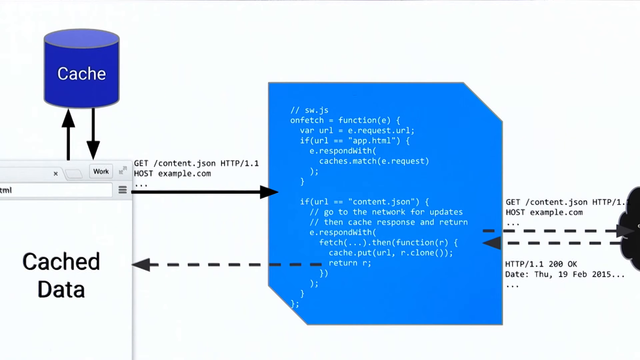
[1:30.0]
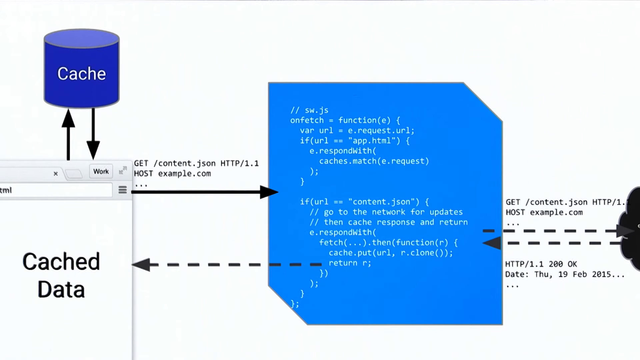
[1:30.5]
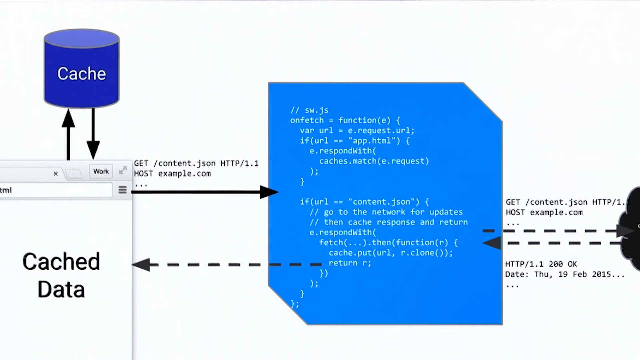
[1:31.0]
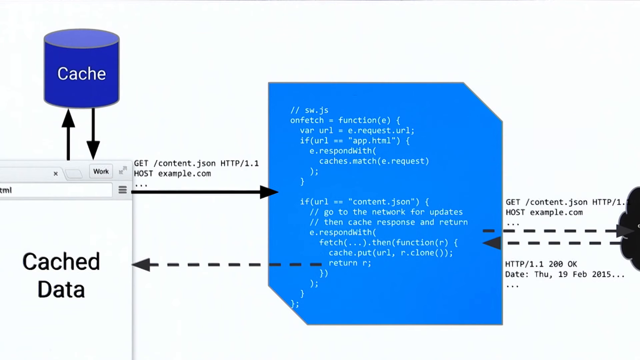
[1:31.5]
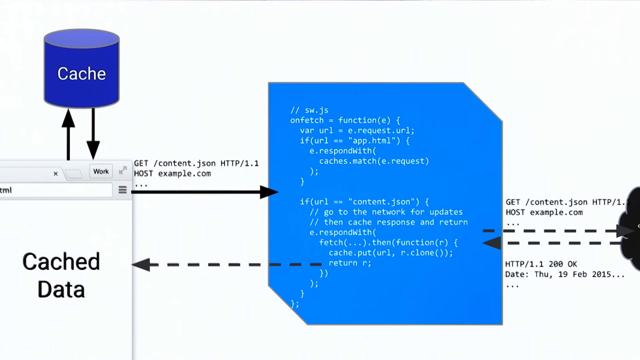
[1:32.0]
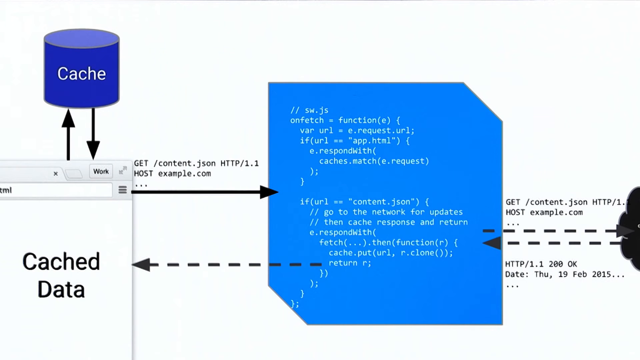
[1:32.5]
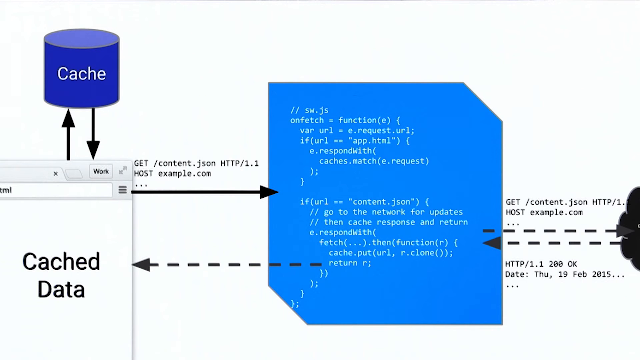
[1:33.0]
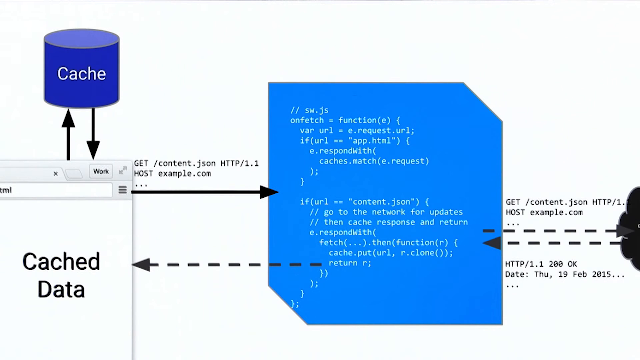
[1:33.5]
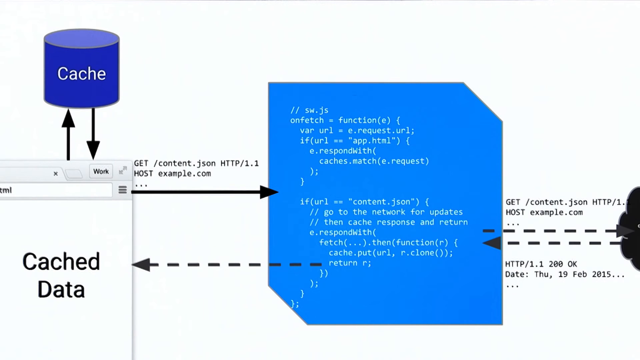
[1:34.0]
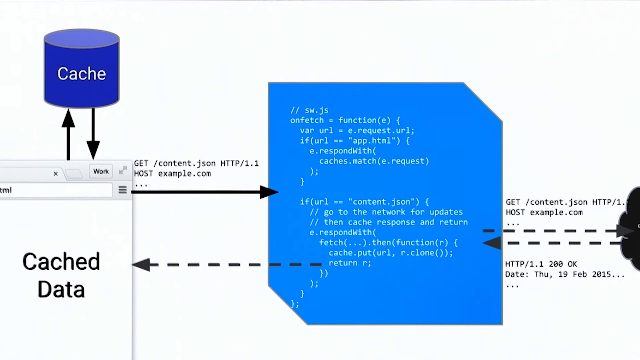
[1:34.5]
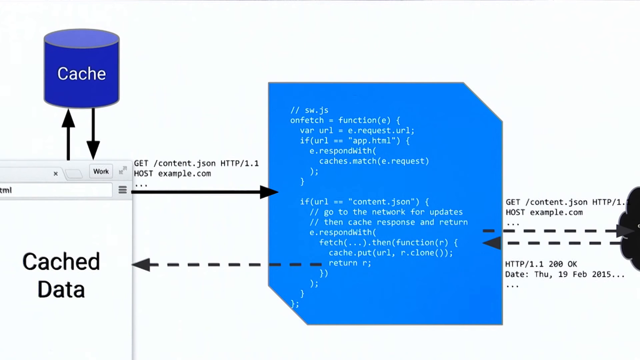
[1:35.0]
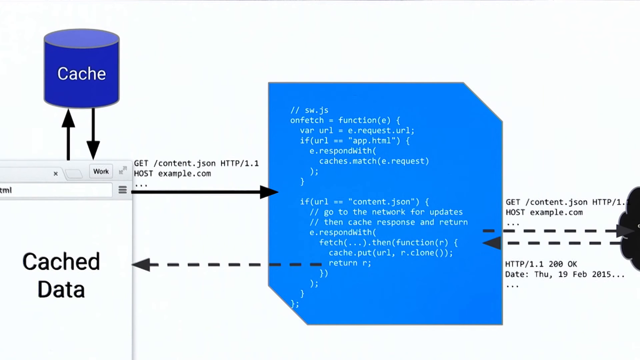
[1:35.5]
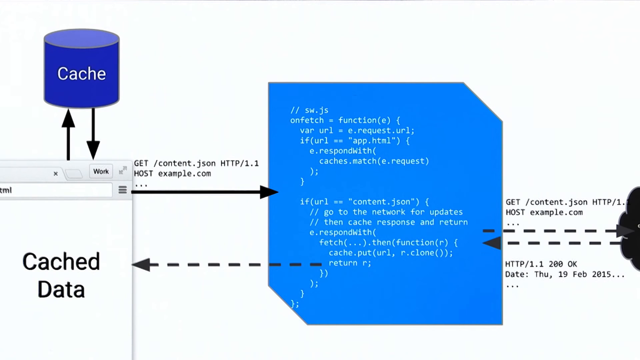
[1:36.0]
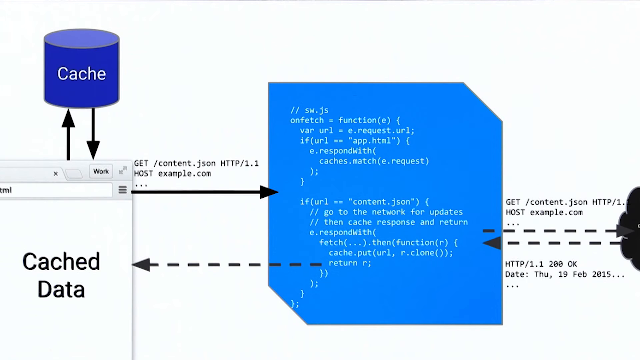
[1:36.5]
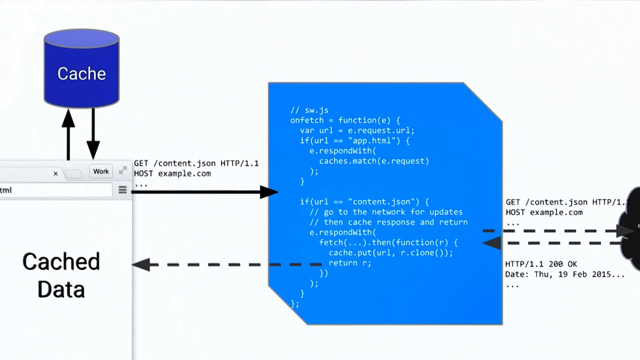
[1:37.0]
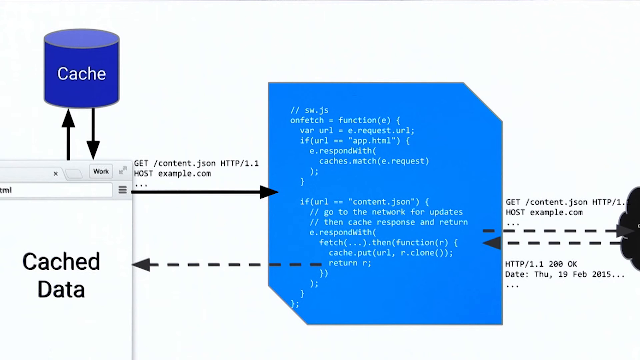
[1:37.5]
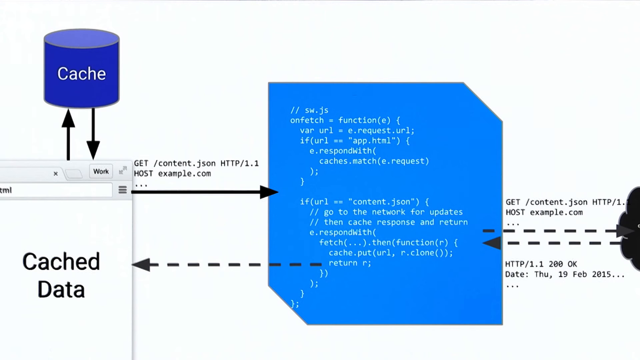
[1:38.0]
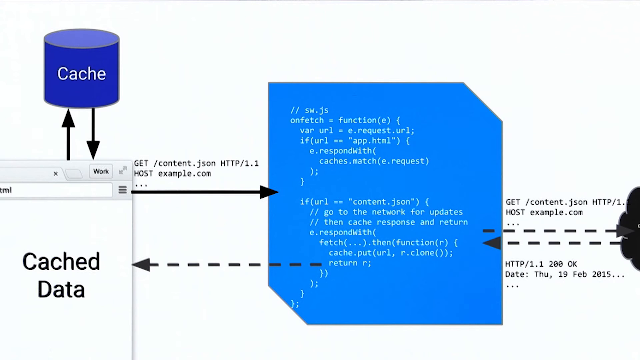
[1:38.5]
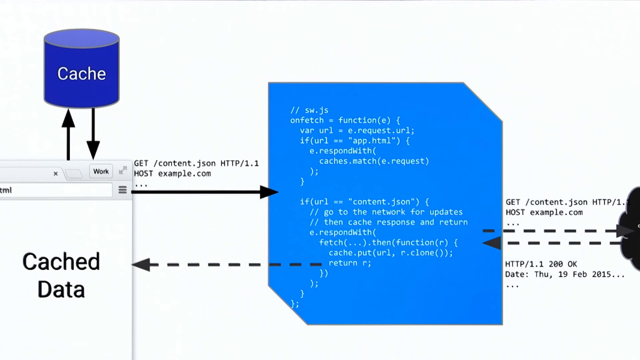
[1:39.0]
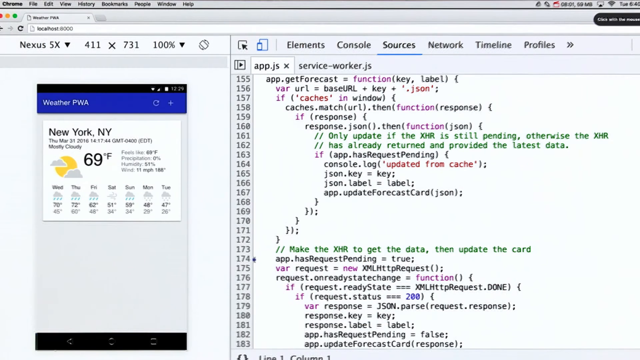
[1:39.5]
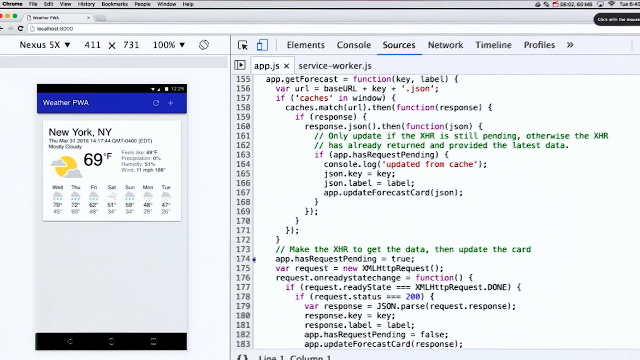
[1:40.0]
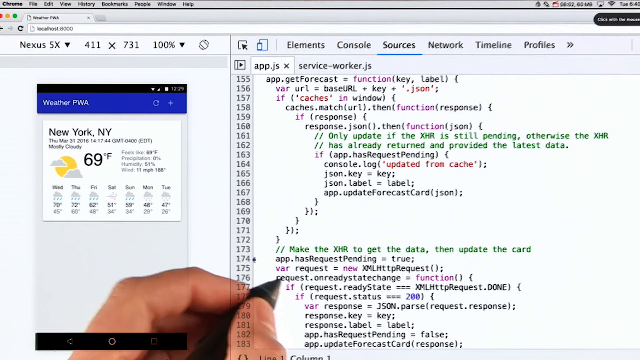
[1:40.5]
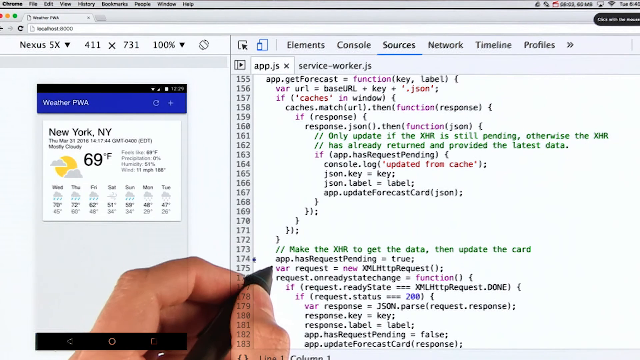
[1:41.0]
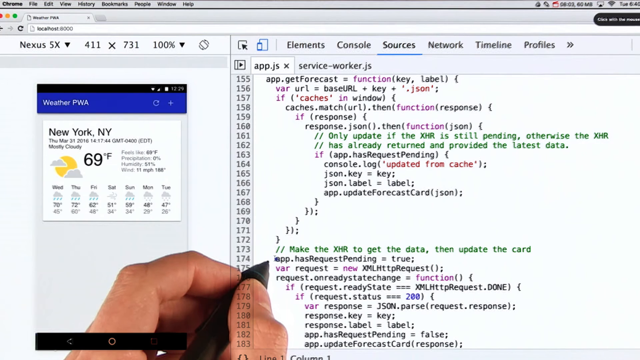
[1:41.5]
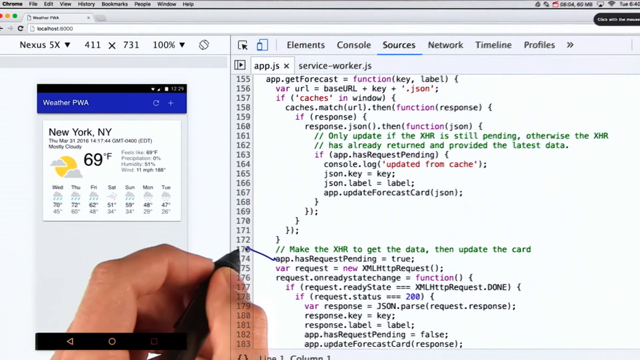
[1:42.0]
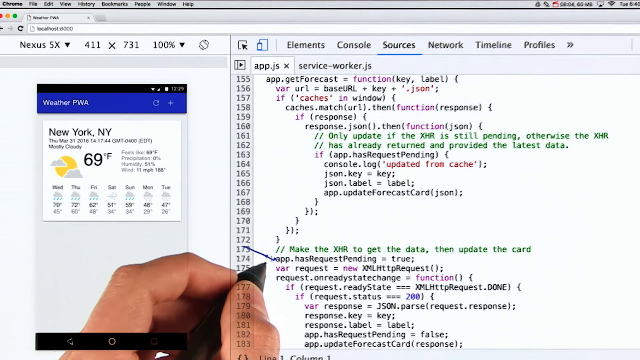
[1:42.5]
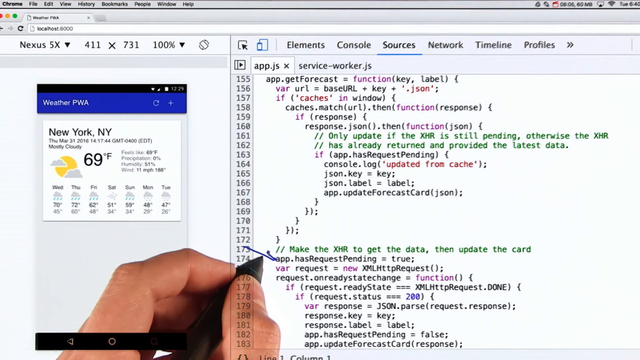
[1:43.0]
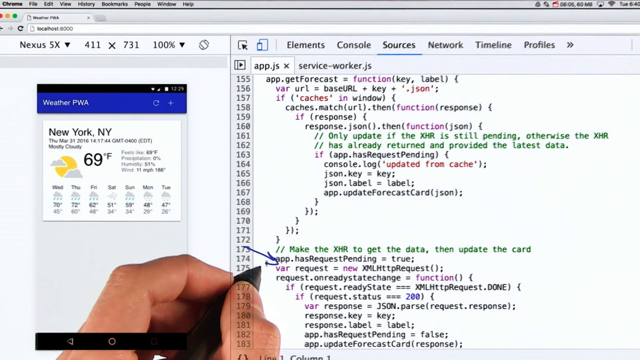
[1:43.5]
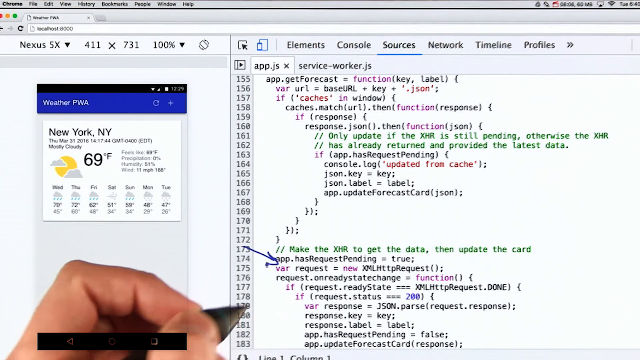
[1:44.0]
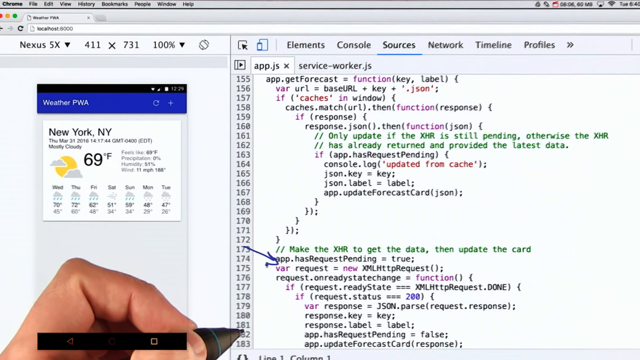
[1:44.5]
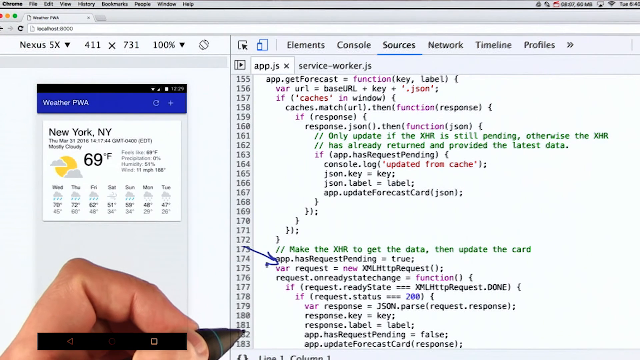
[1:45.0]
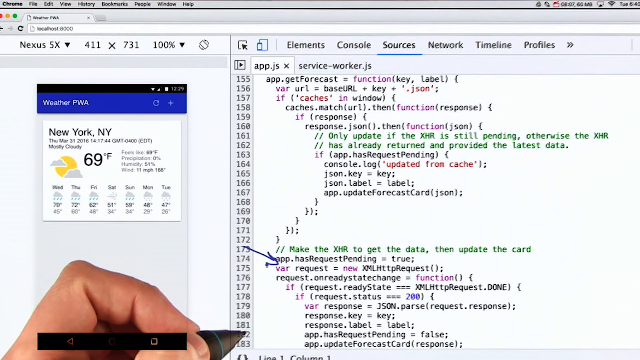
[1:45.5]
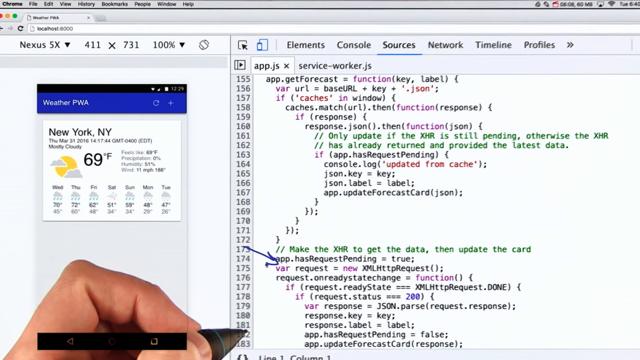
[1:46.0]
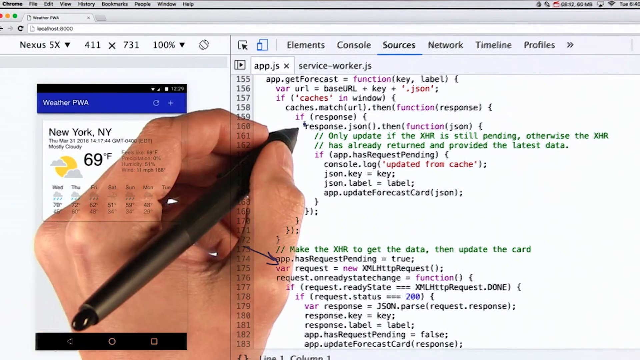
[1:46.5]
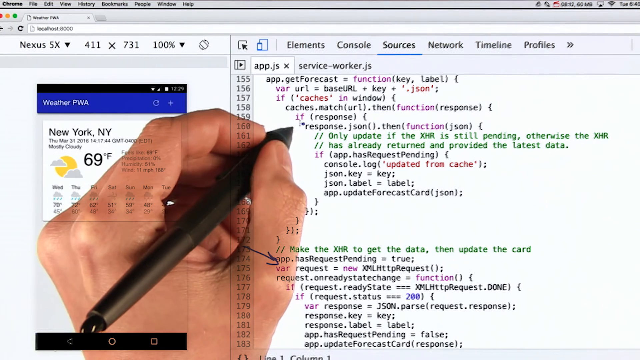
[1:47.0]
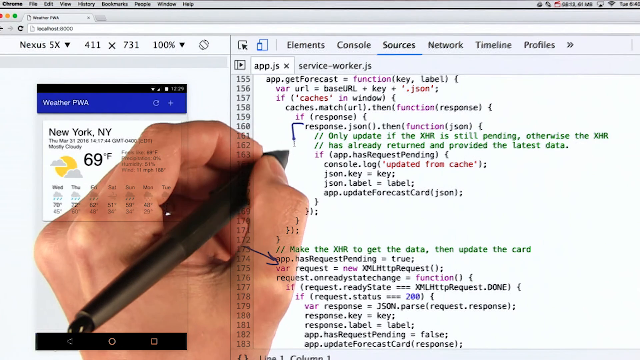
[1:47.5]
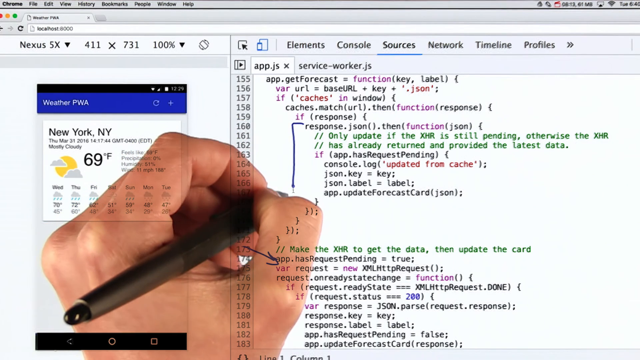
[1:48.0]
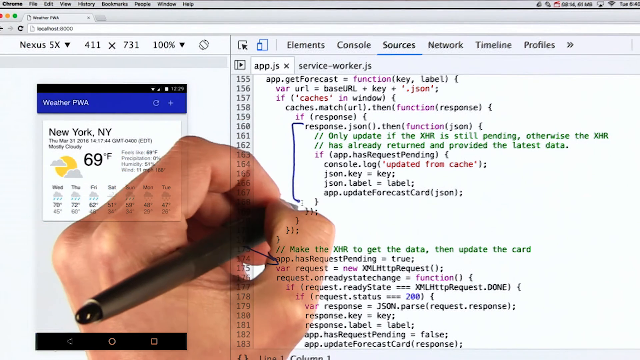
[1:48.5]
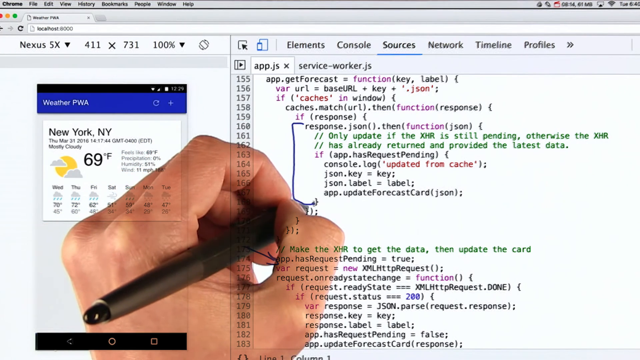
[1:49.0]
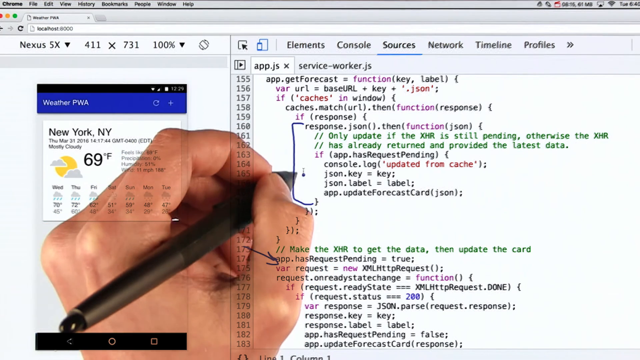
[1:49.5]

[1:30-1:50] A diagram shows a blue cylinder at the top left reading "cache", with arrows leading down to the lower left-hand corner, which reads "cached data". In the middle is a blue rectangle with its edges cut off, containing computer programming. At the far right is something kind of bumpy and black. Arrows go to and fro connecting the cached data, the blue programming, and the black object. Then the page with the weather in the background pops up again, showing programming open; a pen has drawn an arrow from line 173 down to "bar request", and he connects a couple of other areas again.